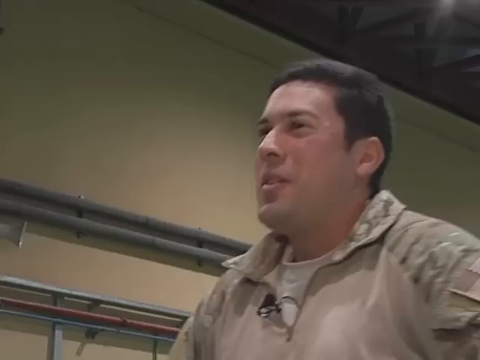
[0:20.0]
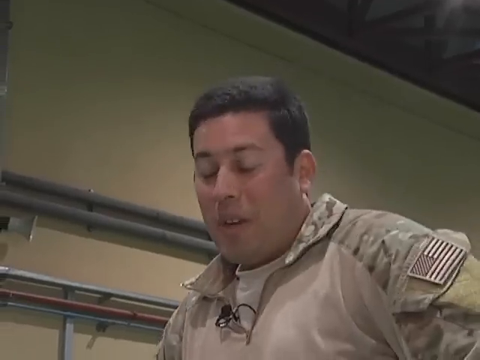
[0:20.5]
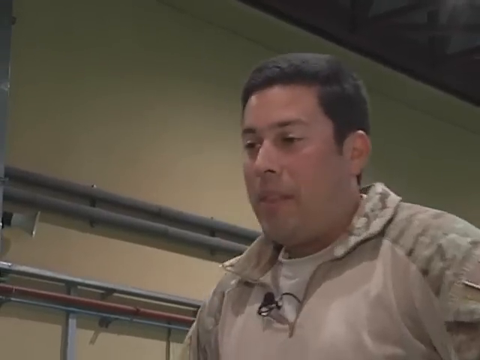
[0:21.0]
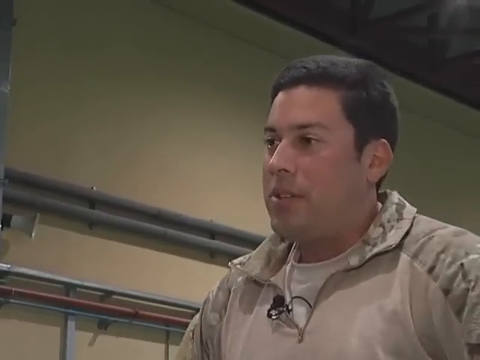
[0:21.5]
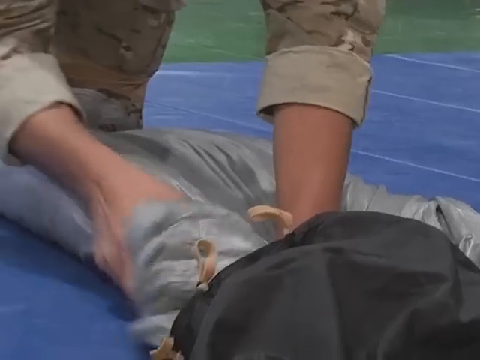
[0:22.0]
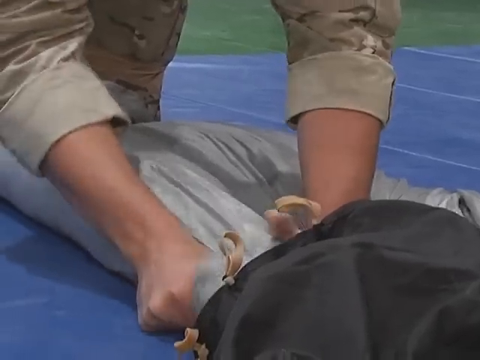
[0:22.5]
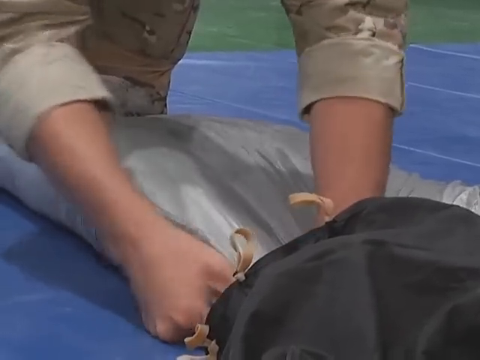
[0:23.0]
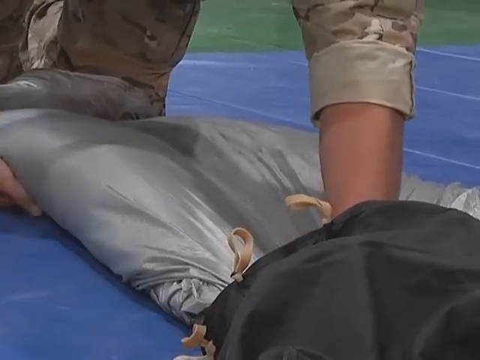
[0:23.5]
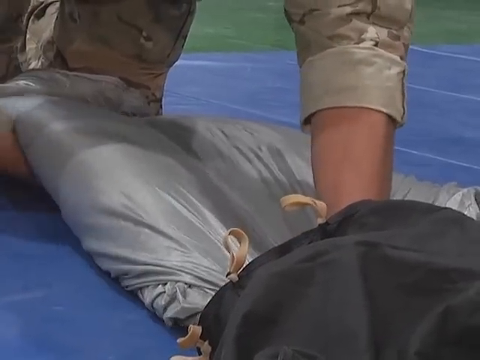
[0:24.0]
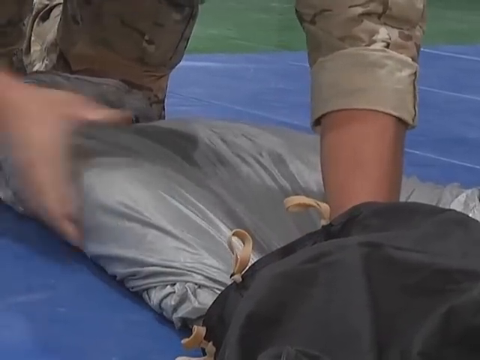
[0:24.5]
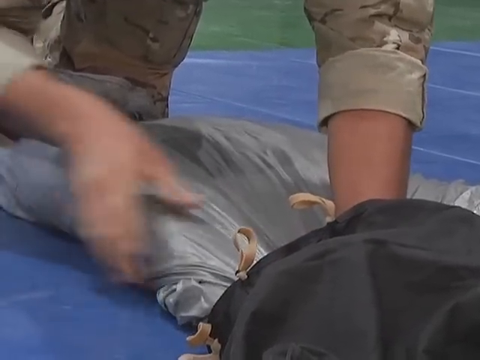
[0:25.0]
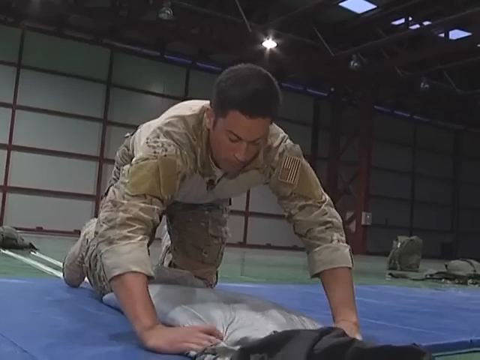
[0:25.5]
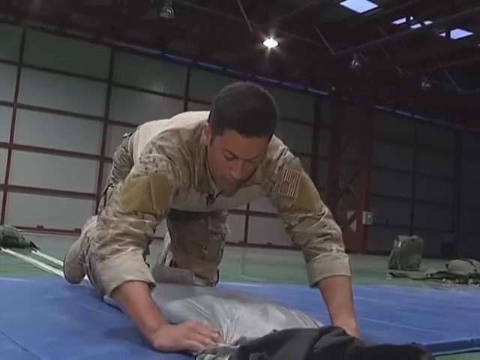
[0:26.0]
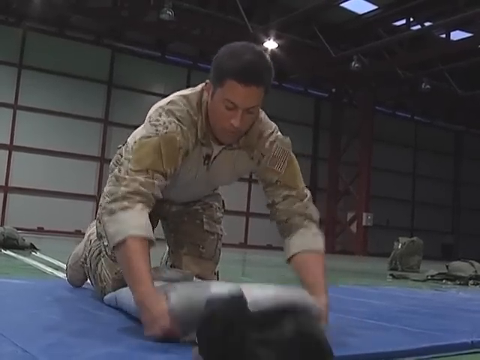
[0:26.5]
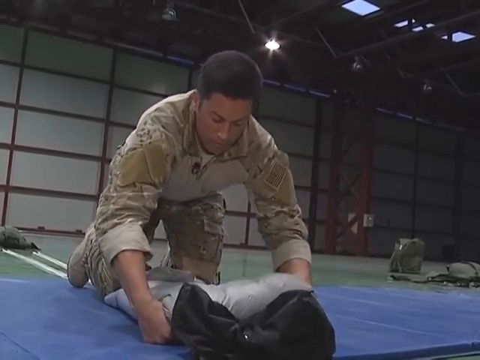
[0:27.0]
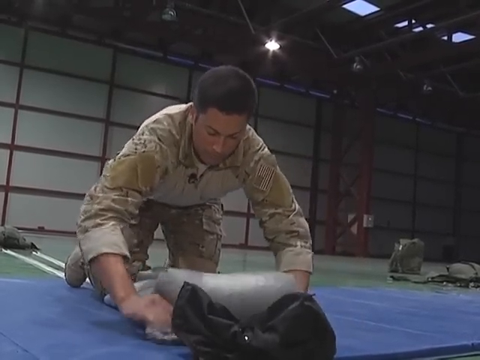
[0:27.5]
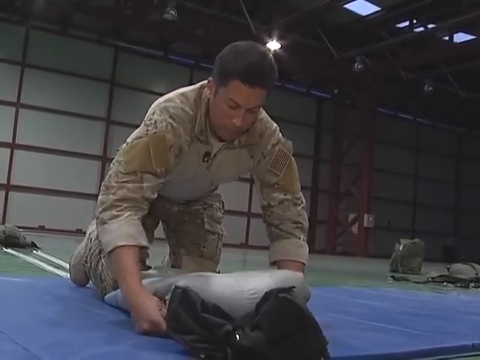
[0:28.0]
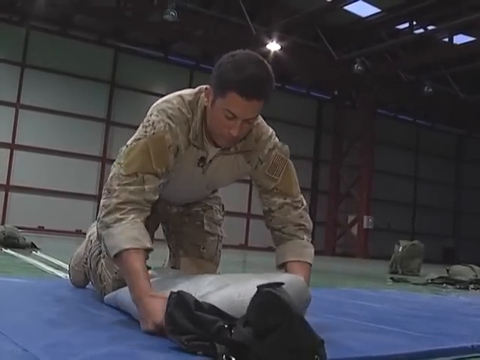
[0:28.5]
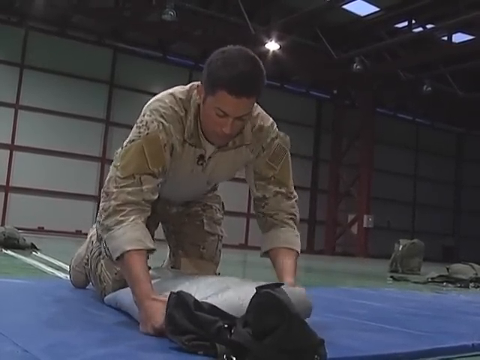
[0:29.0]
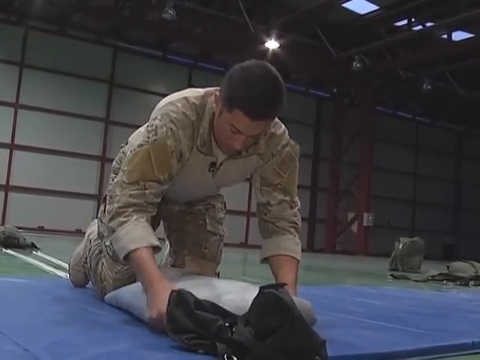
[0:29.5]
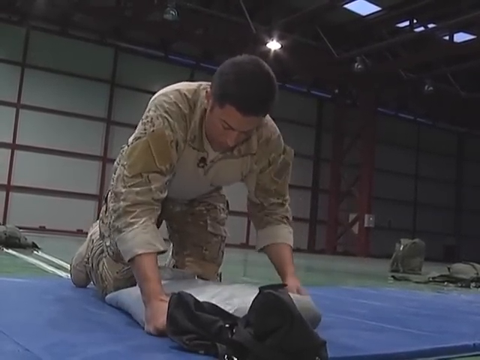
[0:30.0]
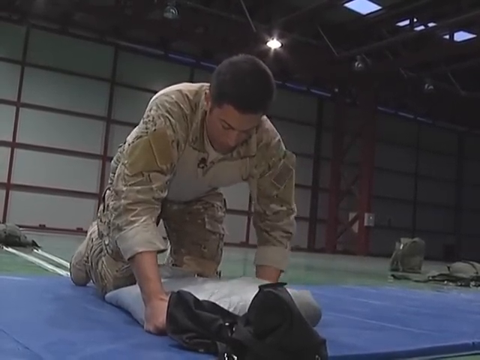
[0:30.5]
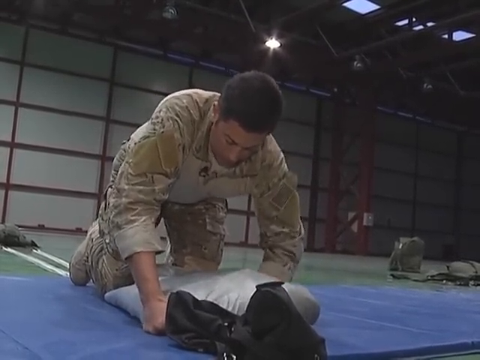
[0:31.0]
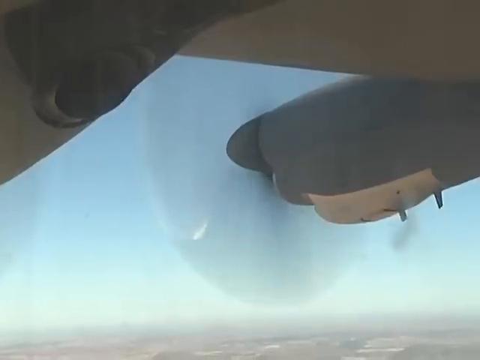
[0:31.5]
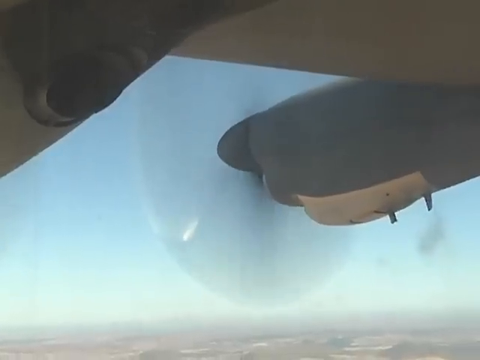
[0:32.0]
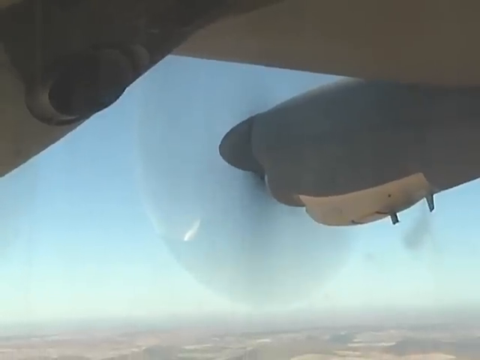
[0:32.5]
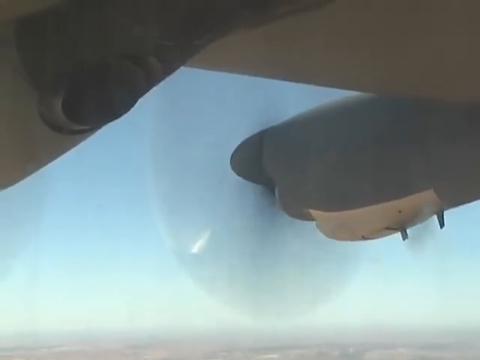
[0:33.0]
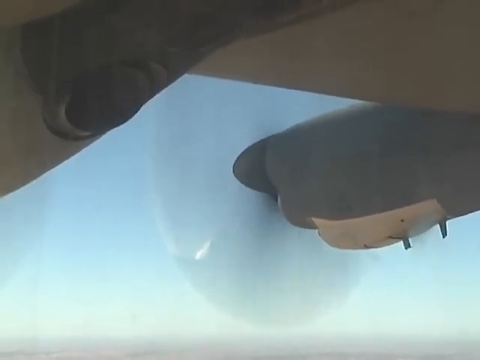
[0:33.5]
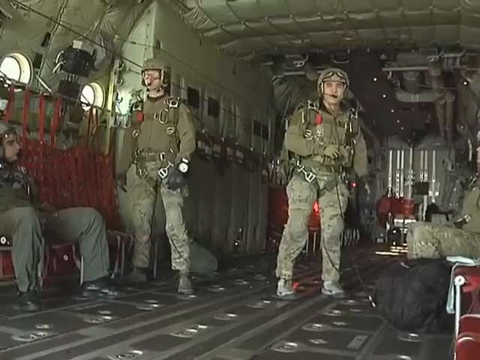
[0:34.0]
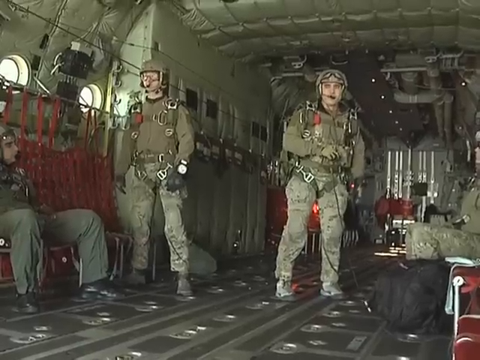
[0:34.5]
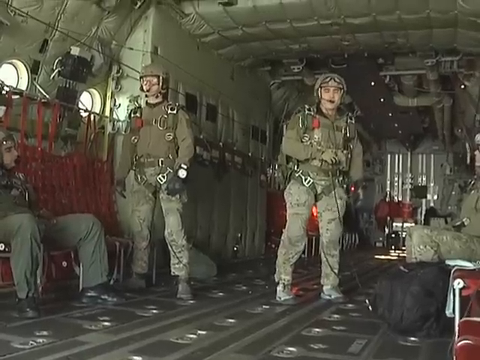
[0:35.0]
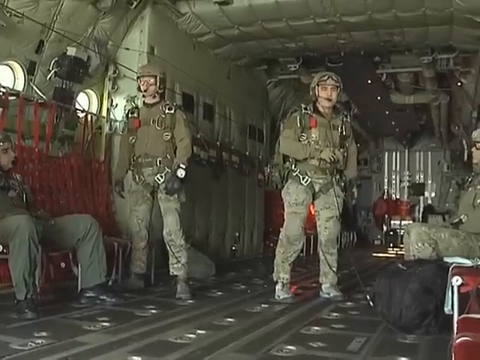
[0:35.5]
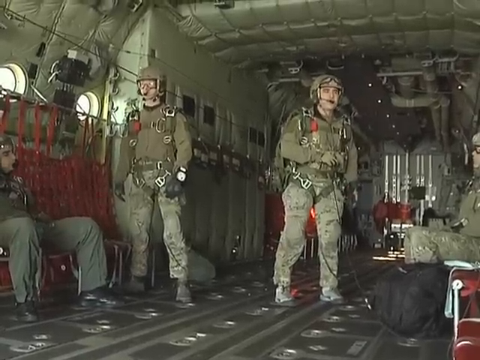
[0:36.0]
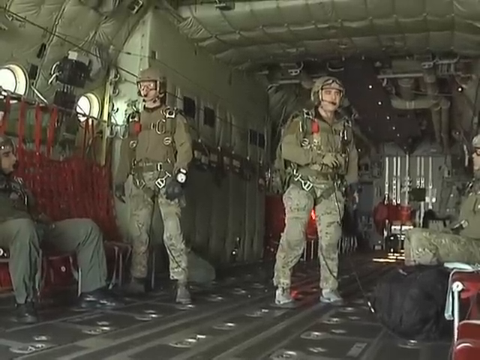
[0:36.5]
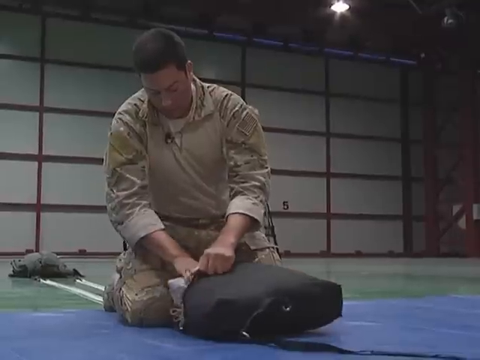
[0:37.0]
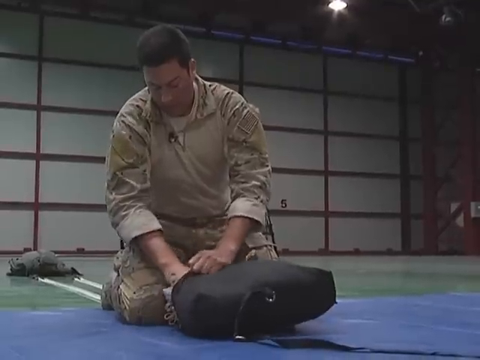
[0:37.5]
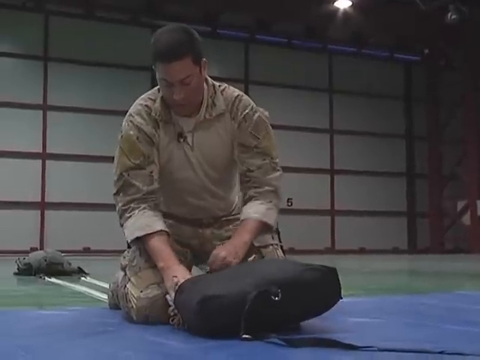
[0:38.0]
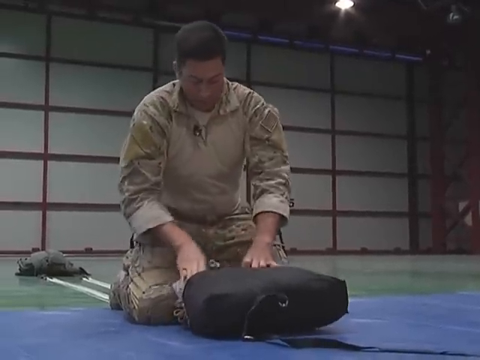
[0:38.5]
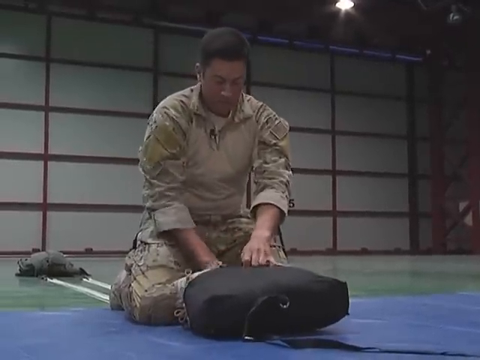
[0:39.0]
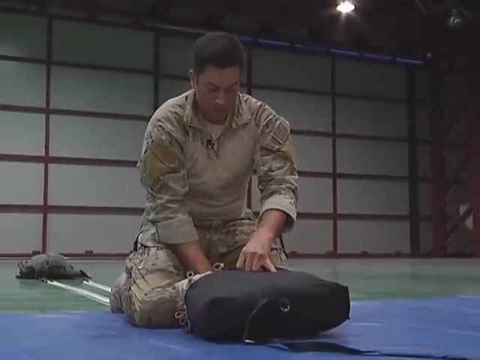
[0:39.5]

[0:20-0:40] A close-up shows an American soldier's face as he talks to someone off-camera to the left of the screen. His top looks like beige army fatigues, and there is an American flag patch on his left arm. The video switches to a close-up of his hands. He kneels on a blue pad inside a large room with a gray folded parachute beneath him, and he is attempting to put the folded parachute into a black sack or bag. Next comes a close-up of a plane's propeller, followed by the interior of a transport plane where four soldiers look as if they are preparing to jump. Two stand in the center and two sit on chairs on either side. The two in the center wear helmets that look like they have microphones attached. The video returns to the soldier stuffing the folded parachute into the black bag; he has it almost completely inside, pushing it in with his right hand and holding the top of the bag with his left.